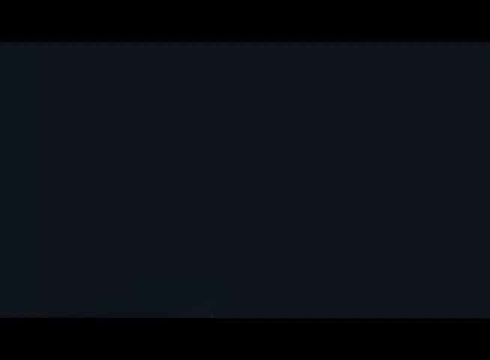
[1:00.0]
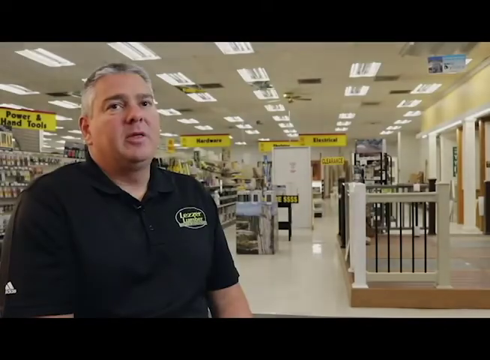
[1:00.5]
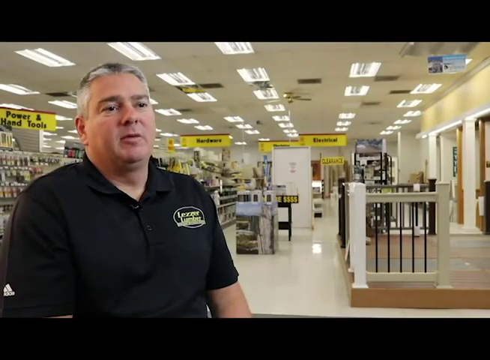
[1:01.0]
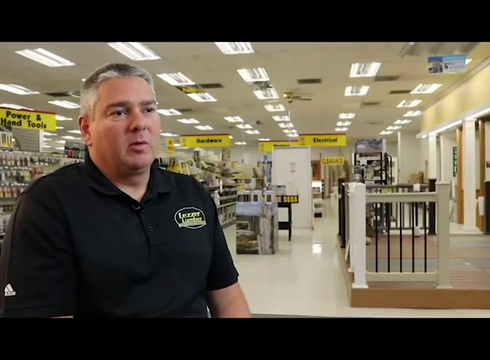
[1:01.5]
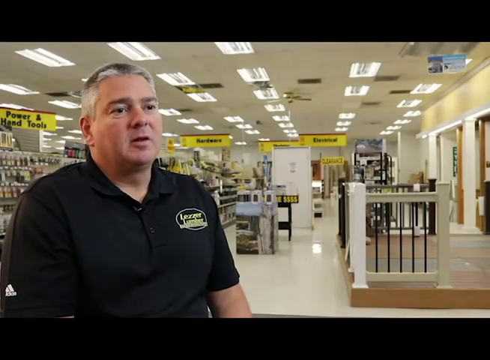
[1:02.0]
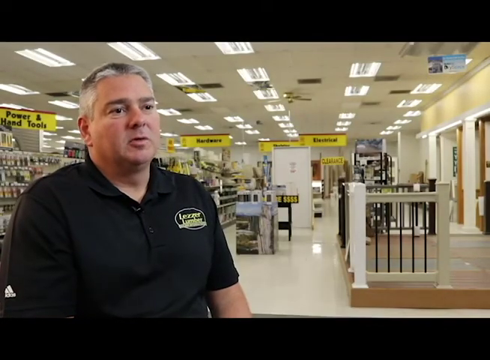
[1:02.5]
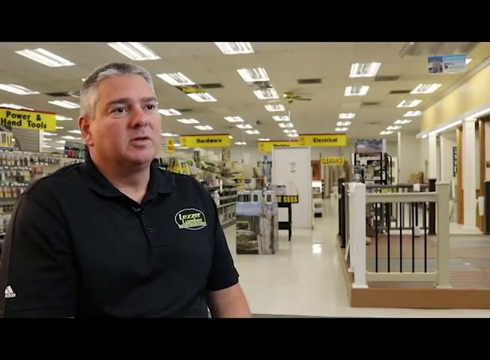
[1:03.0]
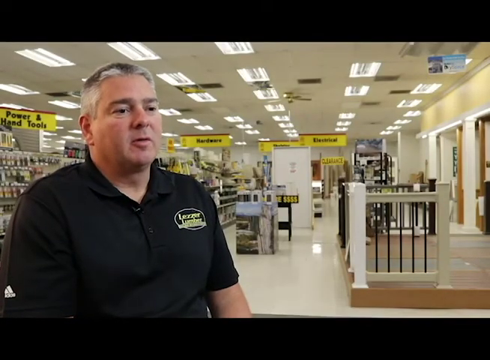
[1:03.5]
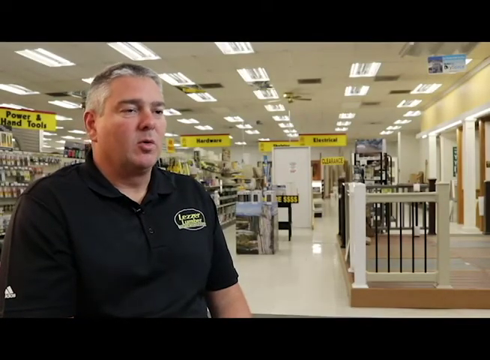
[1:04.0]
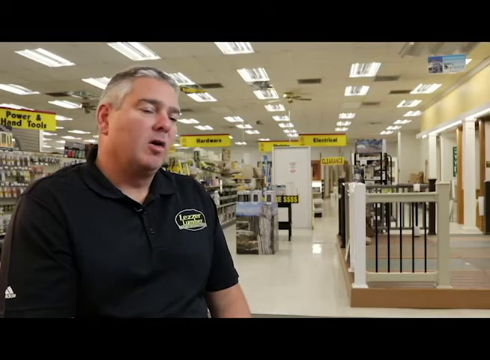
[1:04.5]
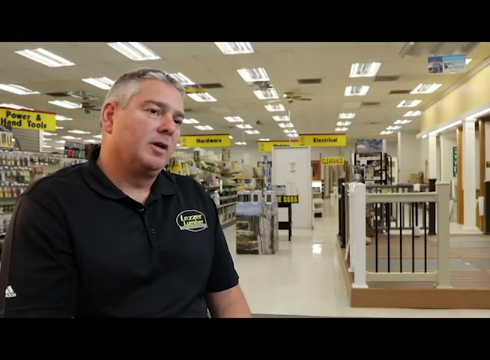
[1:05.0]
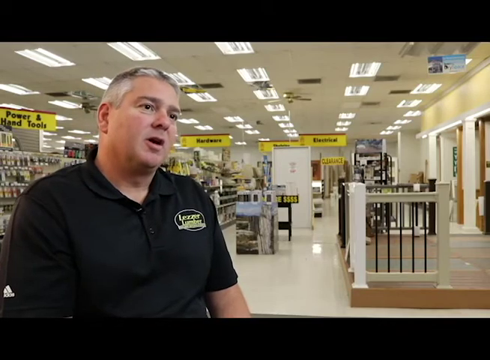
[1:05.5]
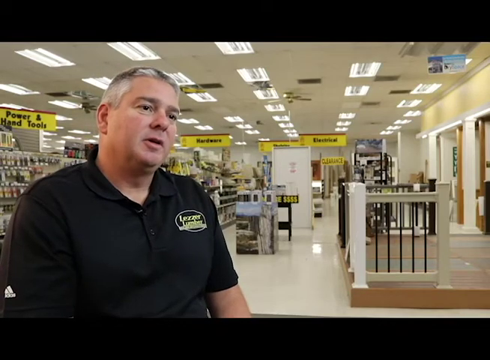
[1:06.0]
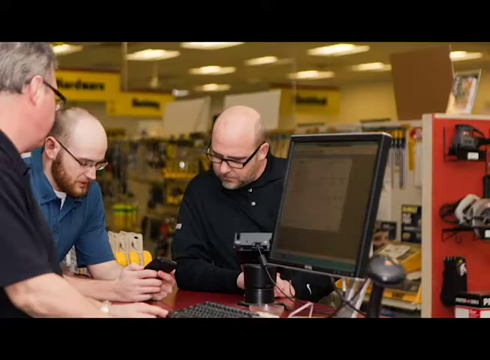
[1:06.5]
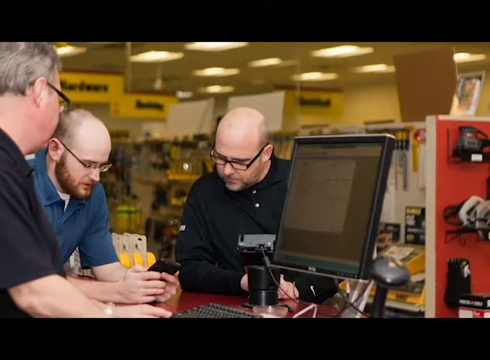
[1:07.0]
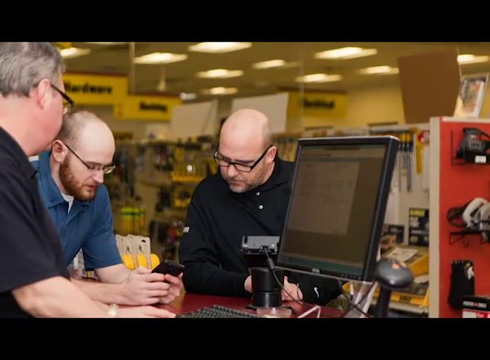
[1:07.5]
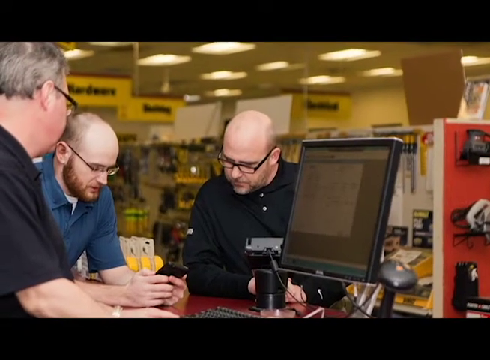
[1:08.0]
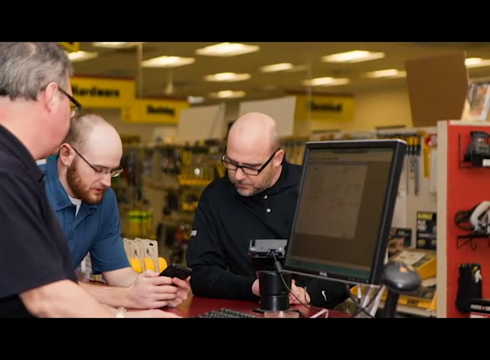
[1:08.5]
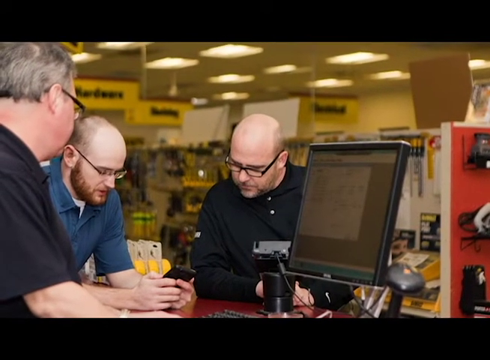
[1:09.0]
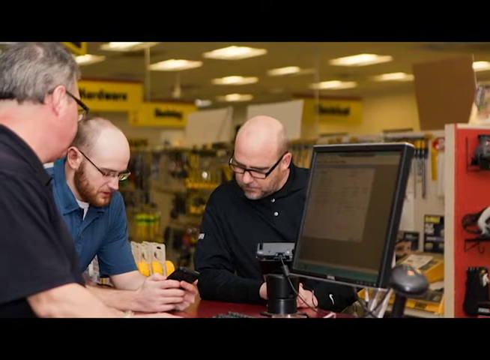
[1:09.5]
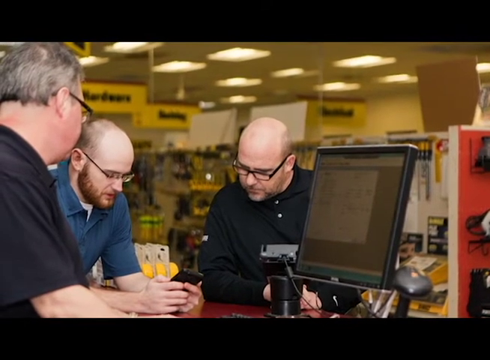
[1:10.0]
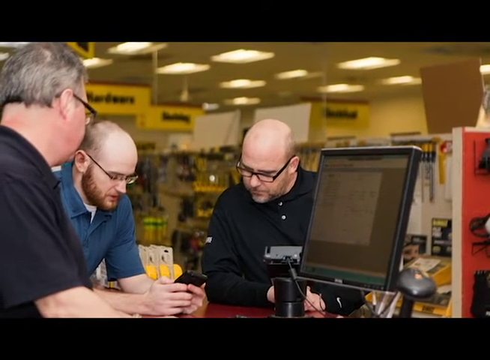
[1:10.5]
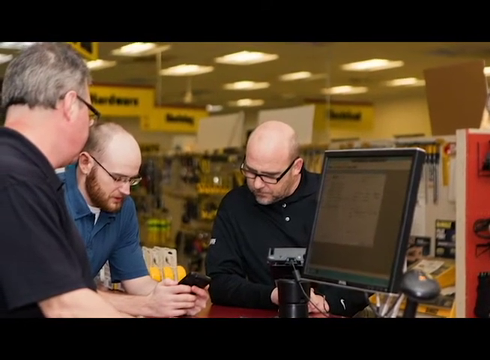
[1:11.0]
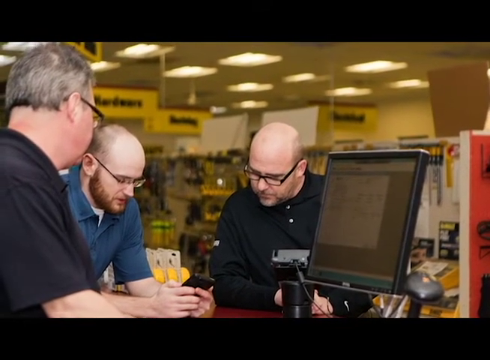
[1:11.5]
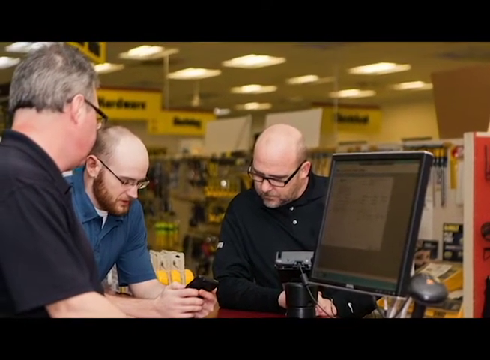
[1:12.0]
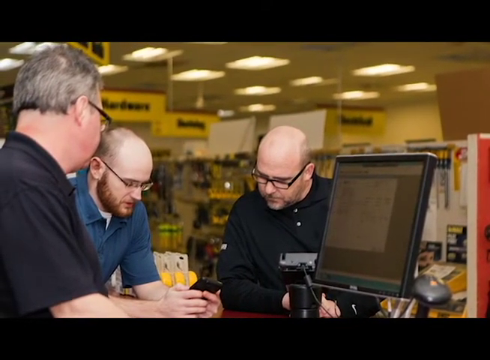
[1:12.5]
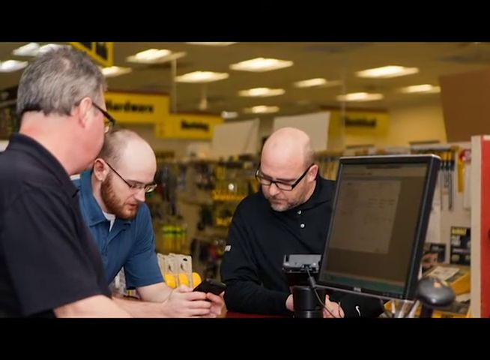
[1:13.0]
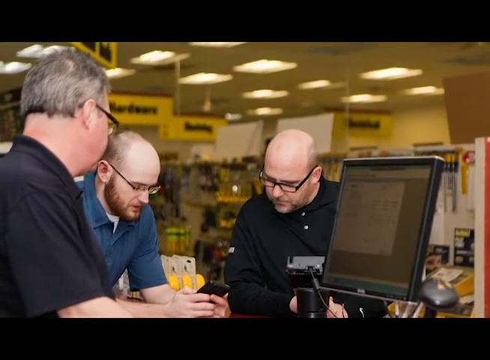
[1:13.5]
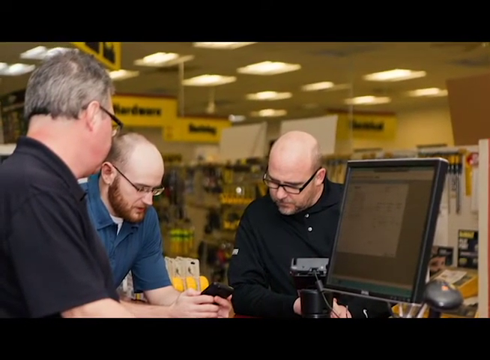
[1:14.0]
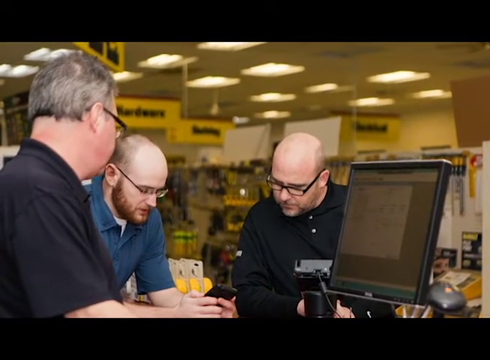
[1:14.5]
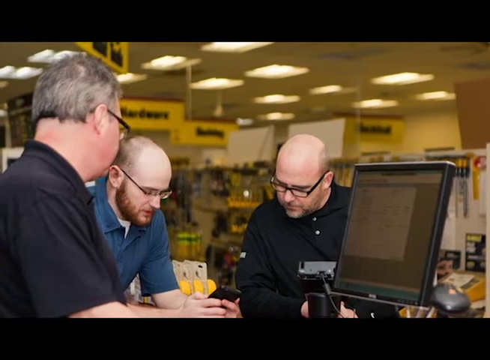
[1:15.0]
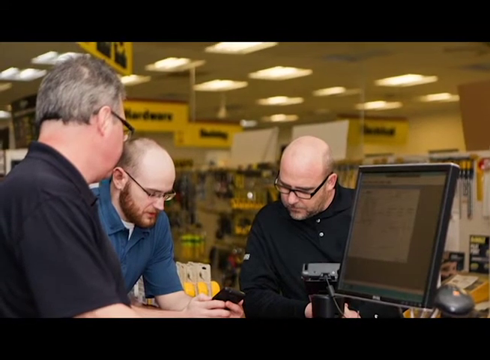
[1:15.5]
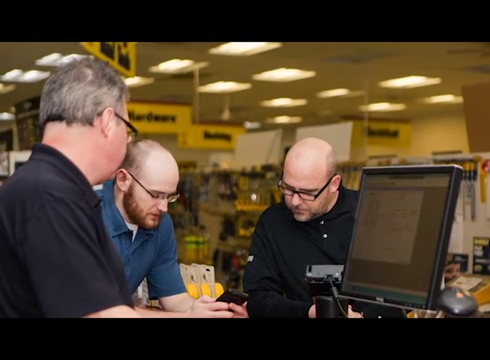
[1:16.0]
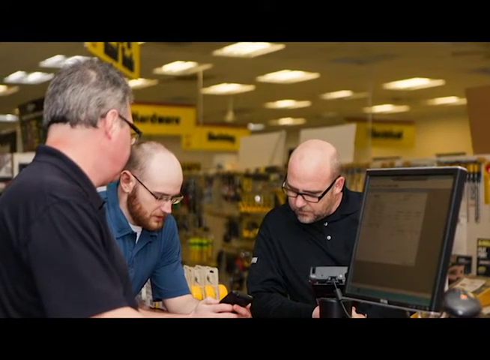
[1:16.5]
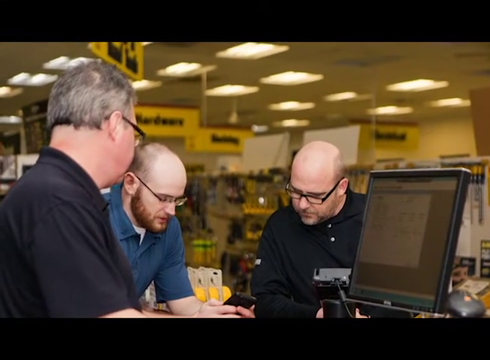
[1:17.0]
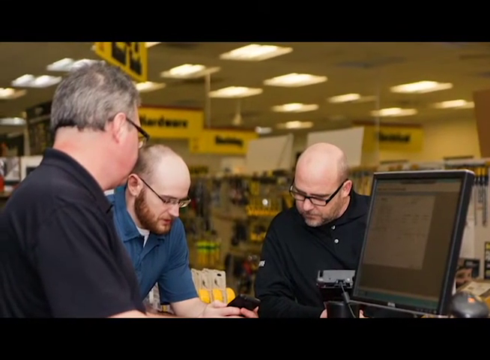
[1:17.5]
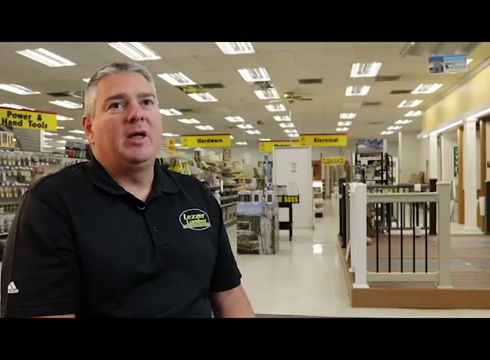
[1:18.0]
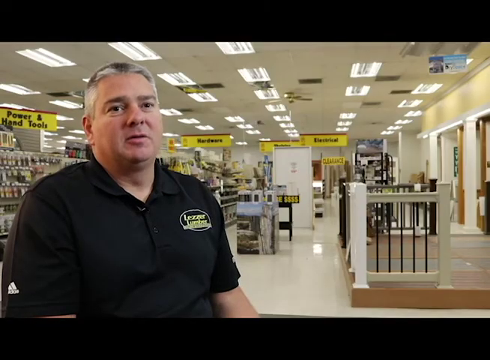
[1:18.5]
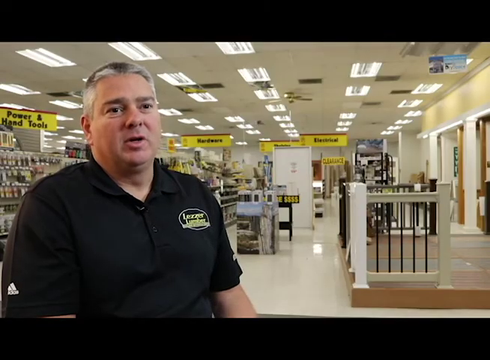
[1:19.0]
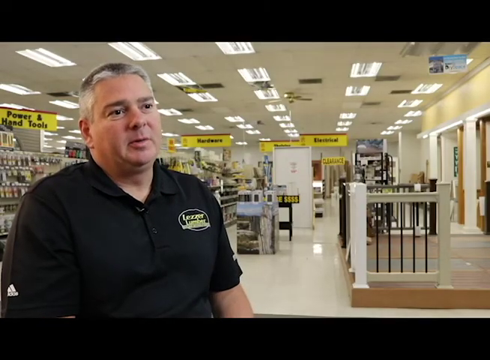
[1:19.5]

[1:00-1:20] The same man talks inside the store, with the yellow signs behind him. On the right is the raised floor with a small piece of fence on it. Next comes a picture of three men, all standing near a counter. The man in the middle wears a blue shirt and glasses and has a phone in his hand. The man to his right, in a black shirt and glasses, is looking down at the phone in the man's hand. The man on the very left wears a blue shirt and glasses and also looks like he is looking at the phone. There is a computer screen on the desk, and yellow signs matching the store from the beginning of the video show that they are standing in that store.